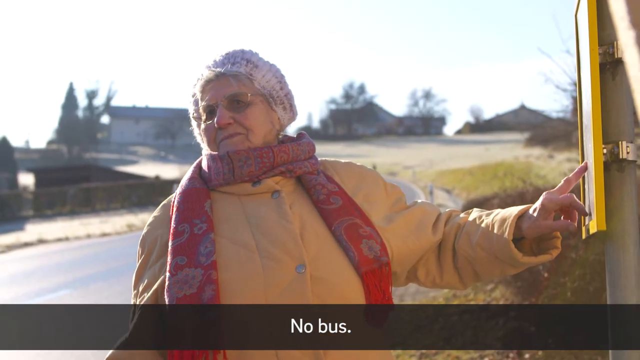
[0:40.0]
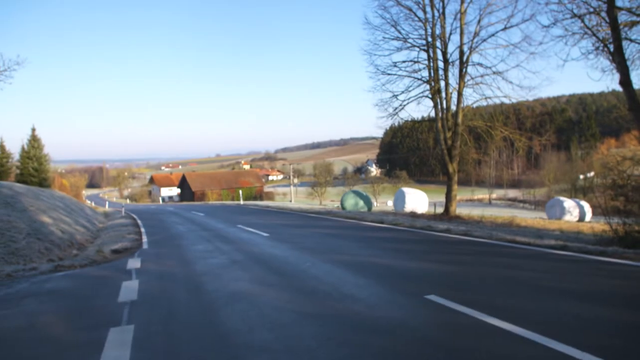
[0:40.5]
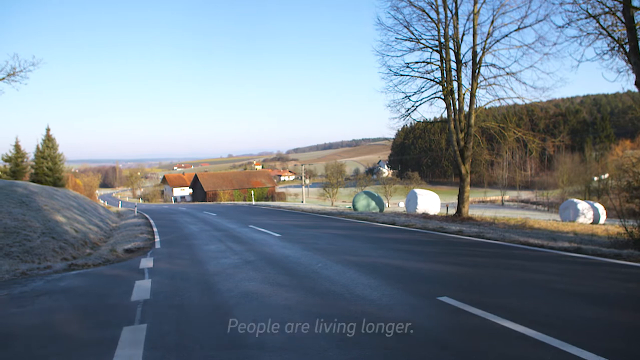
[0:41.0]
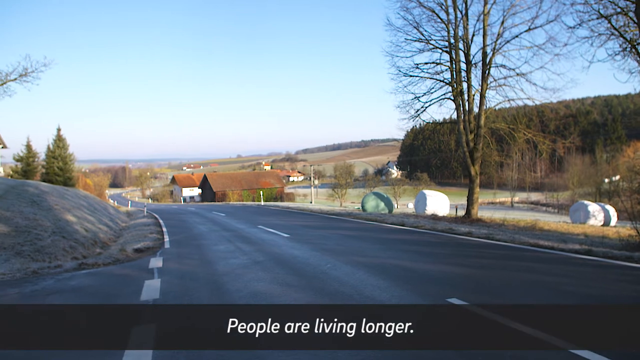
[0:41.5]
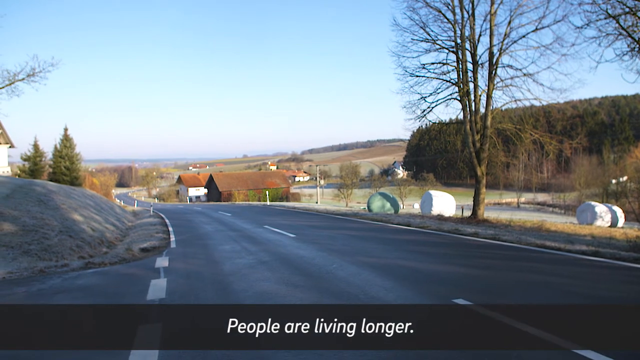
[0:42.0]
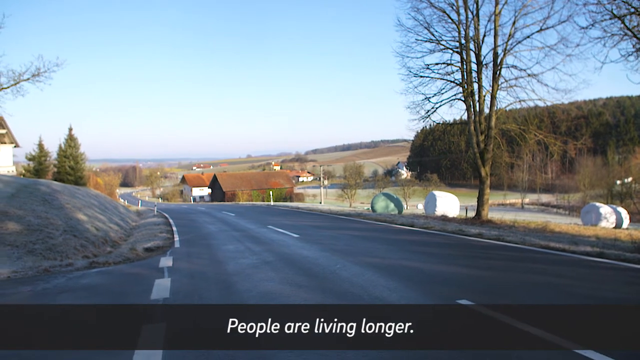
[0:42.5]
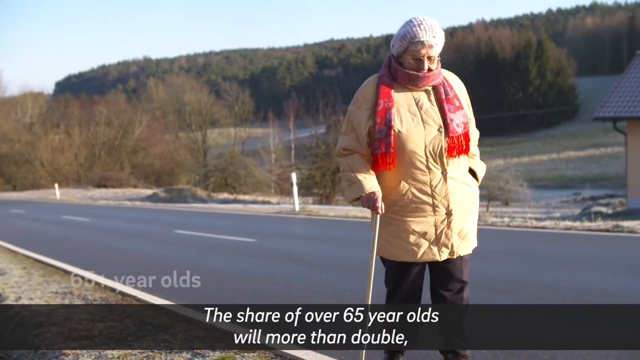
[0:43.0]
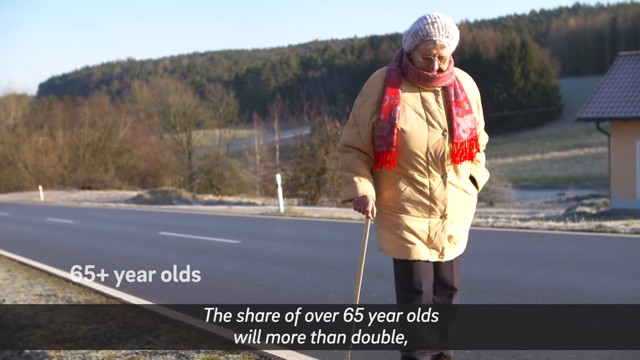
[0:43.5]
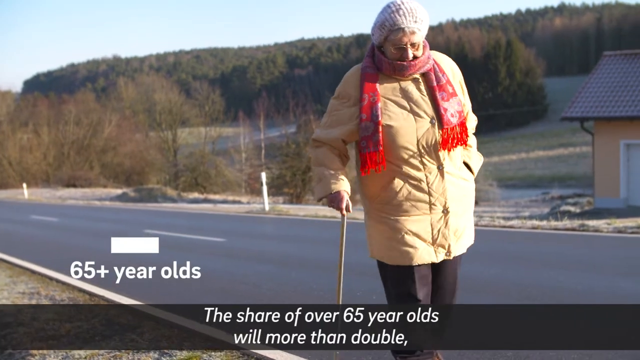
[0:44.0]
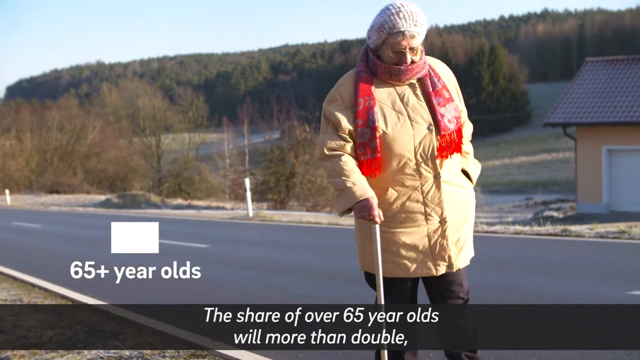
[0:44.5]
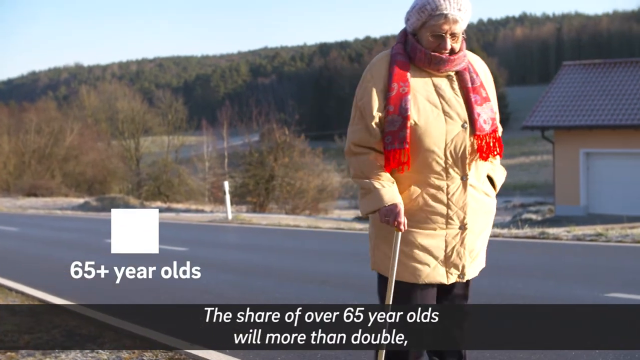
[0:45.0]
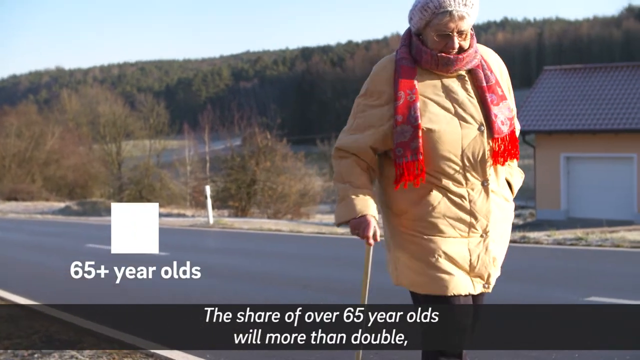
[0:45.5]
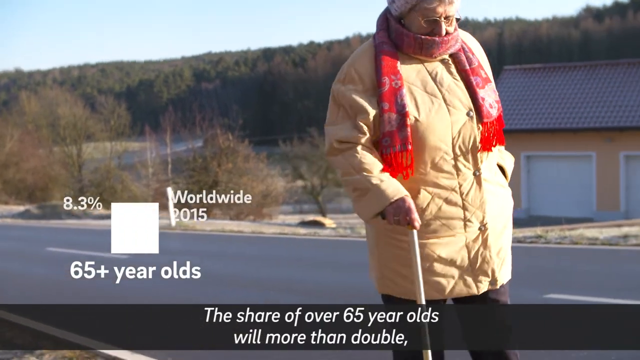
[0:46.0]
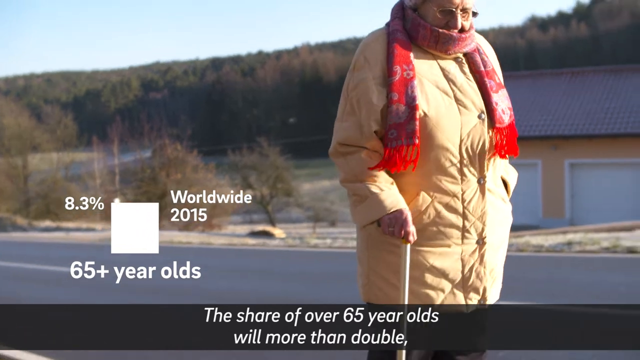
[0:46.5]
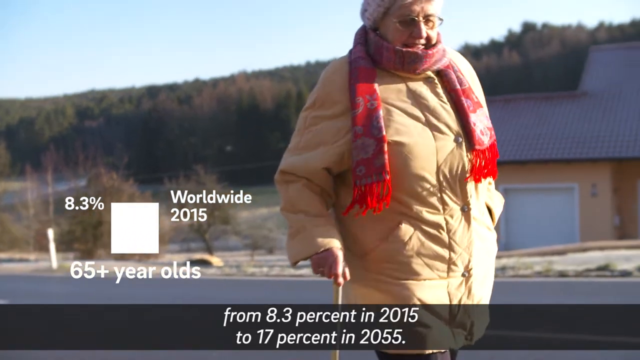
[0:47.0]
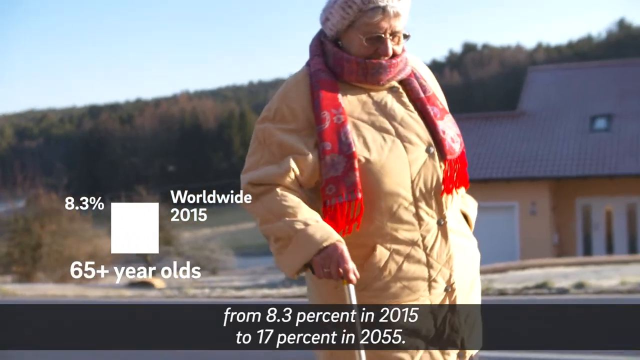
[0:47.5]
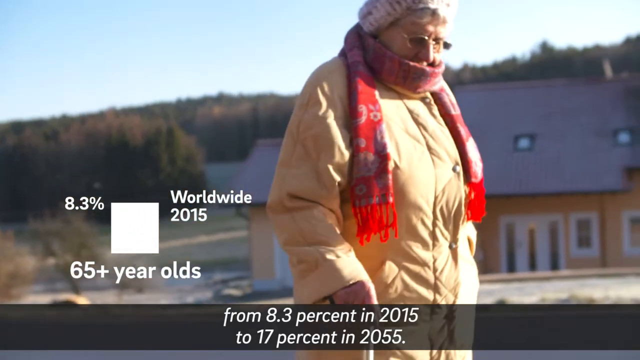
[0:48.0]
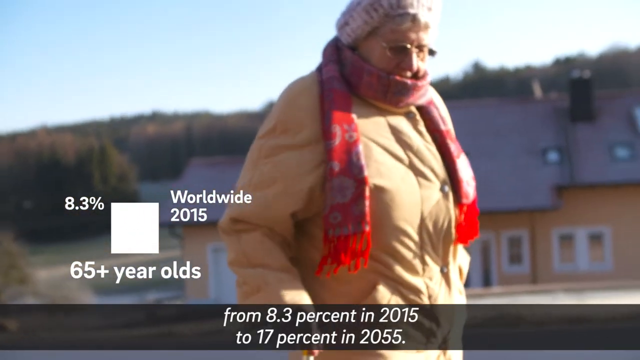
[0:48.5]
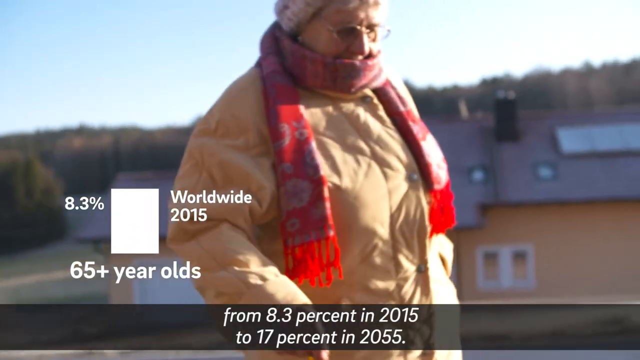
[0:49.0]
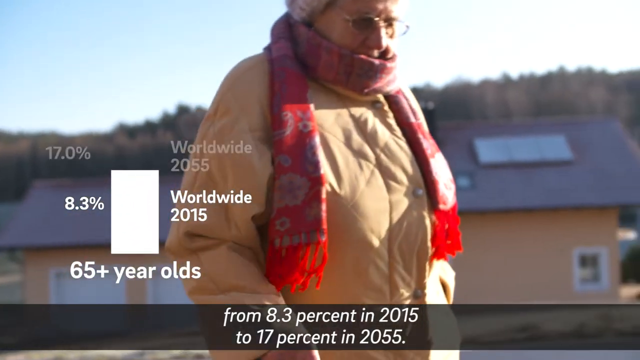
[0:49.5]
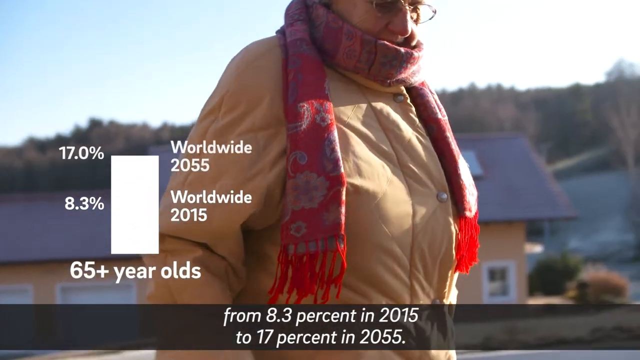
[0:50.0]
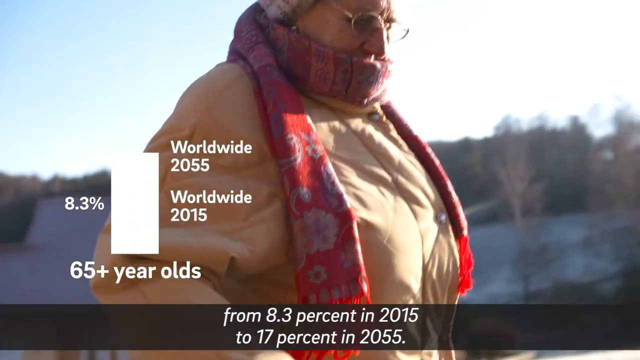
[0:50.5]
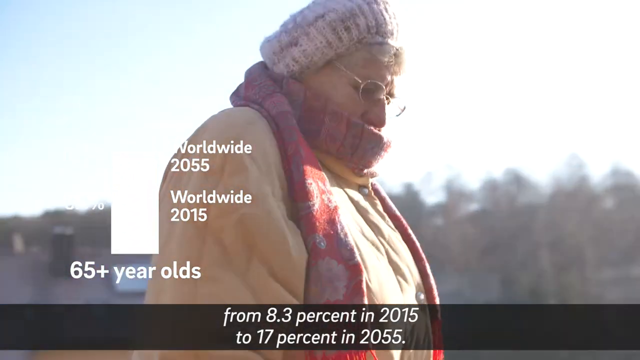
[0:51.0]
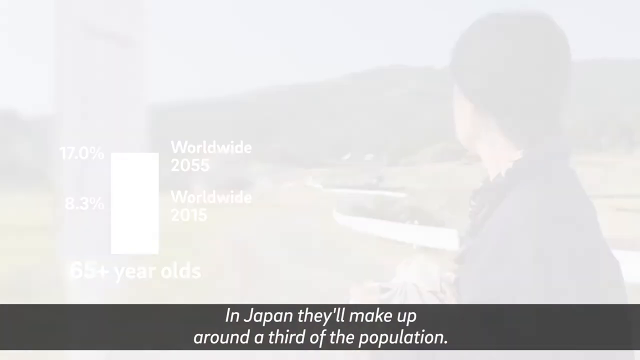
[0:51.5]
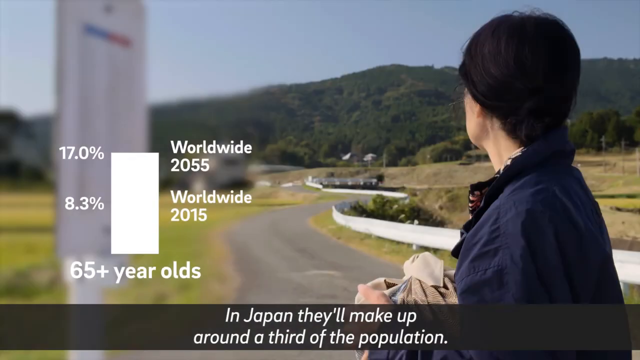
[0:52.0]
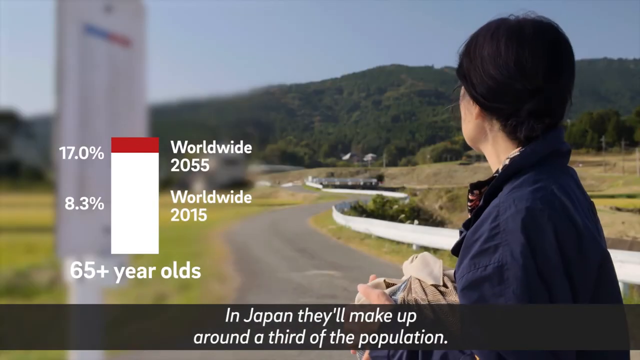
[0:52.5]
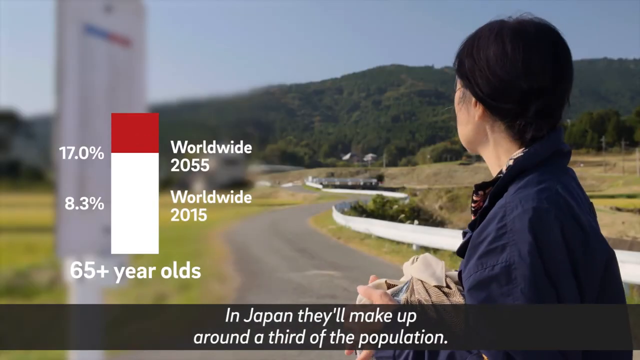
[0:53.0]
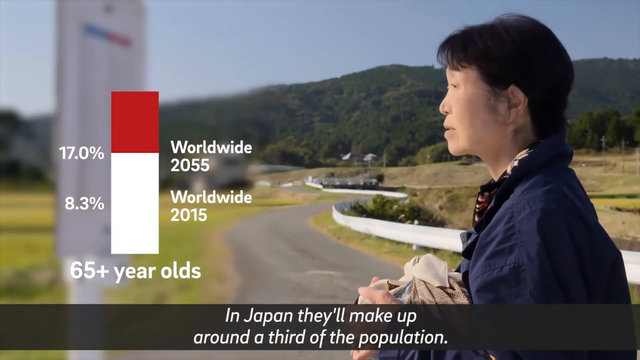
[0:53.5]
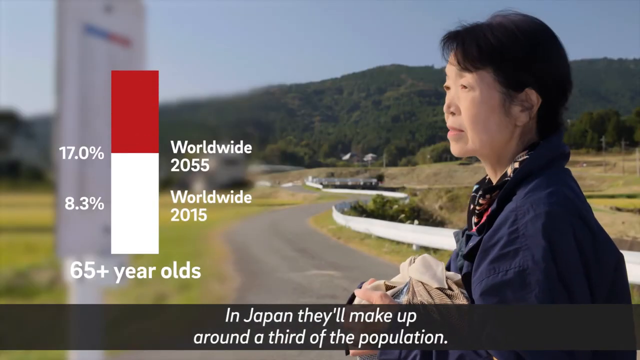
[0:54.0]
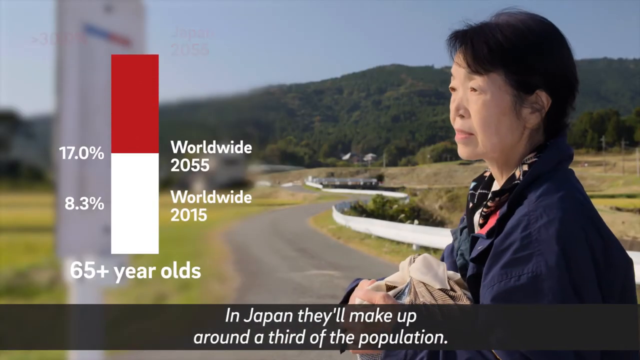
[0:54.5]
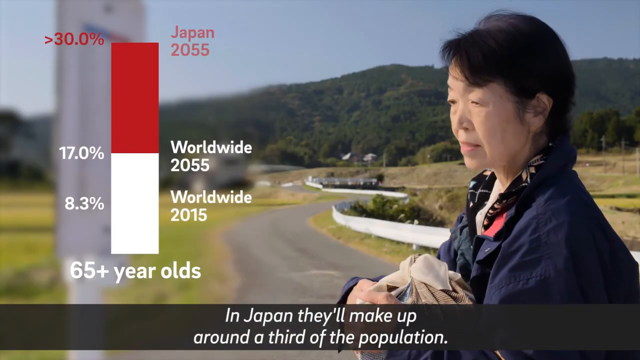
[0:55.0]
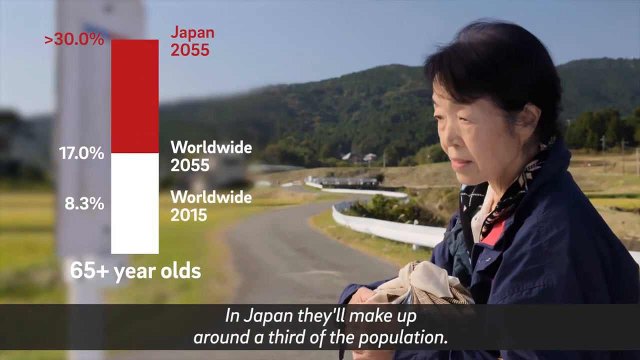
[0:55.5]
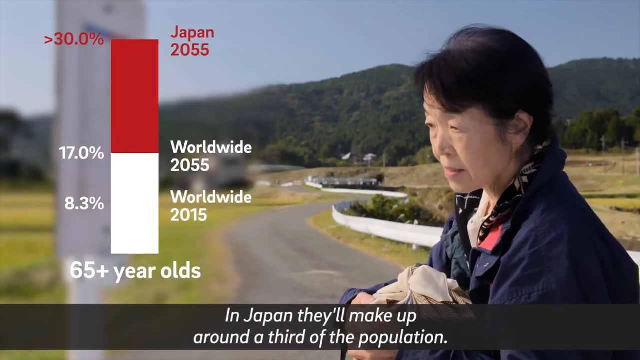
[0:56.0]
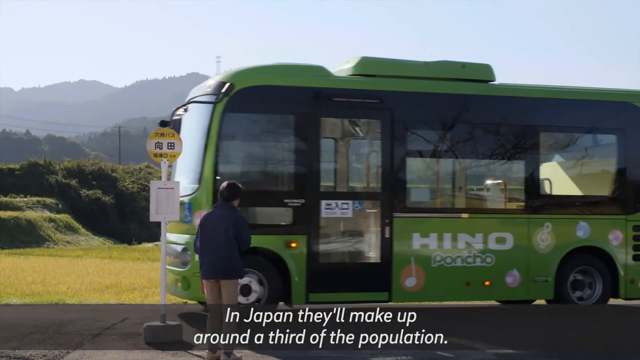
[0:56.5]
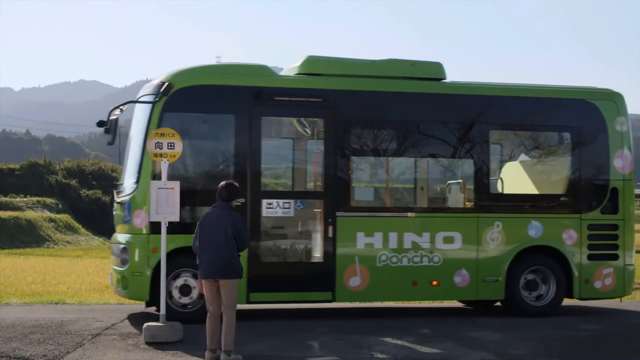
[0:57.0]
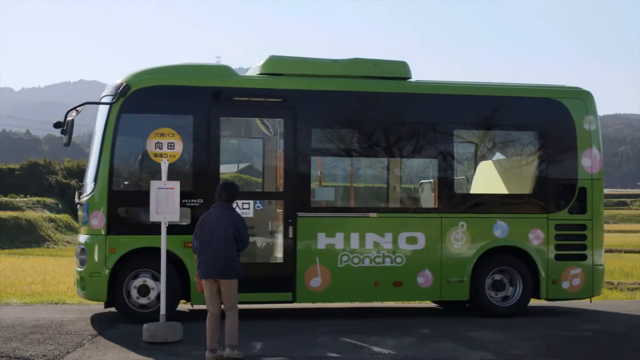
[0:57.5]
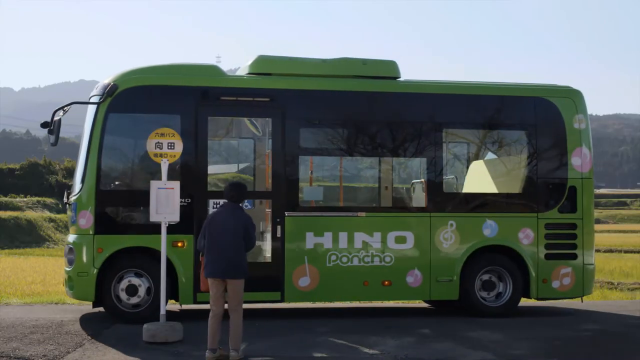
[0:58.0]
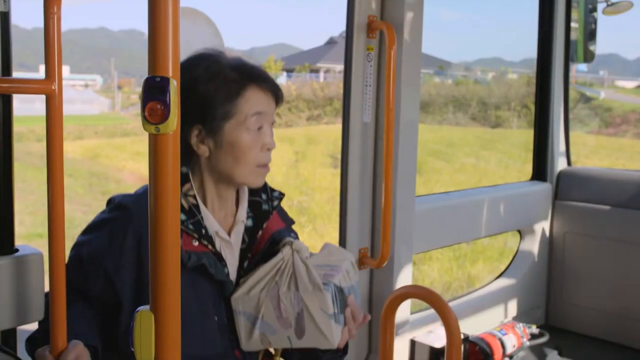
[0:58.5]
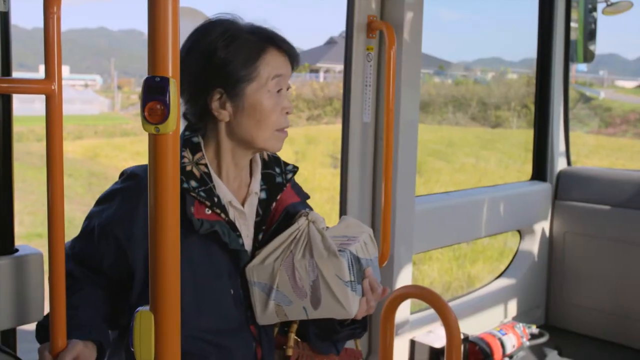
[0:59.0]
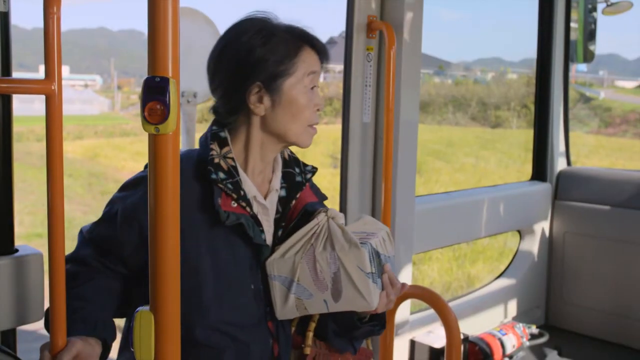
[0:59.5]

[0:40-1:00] An older woman presses what looks like her middle fingernail against the bus stop board, which has a yellow frame. She wears a mostly red scarf, glasses, a hat that looks white but may be gray or another color, and a big yellow puffy jacket, suggesting winter weather. Some trees have leaves, but the tree on the road closest to her has none. She walks, apparently with the help of a staff or cane held in her right hand, though it looks like her left, while facing the camera. Text says the share of people aged 65 and older will more than double from 8.3 percent in 2015, and that in Japan they will make up around one third of the population.